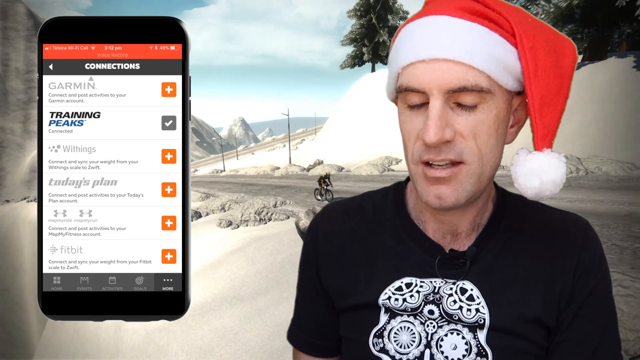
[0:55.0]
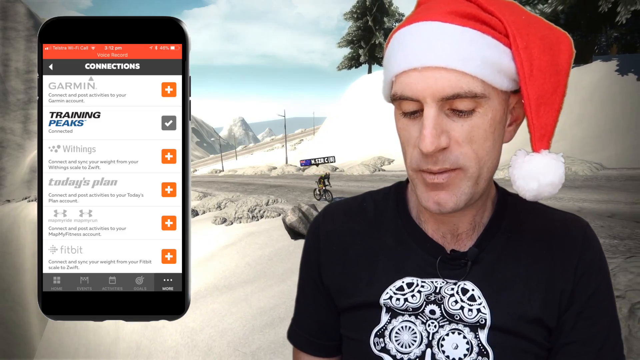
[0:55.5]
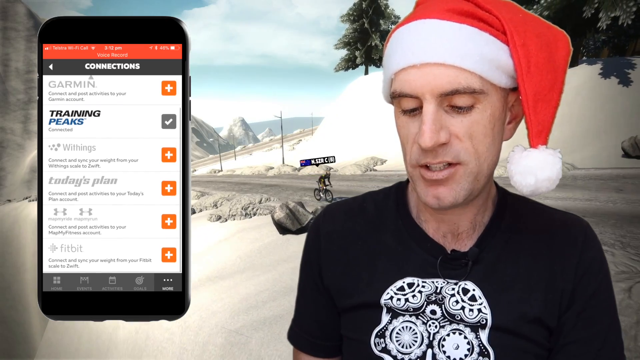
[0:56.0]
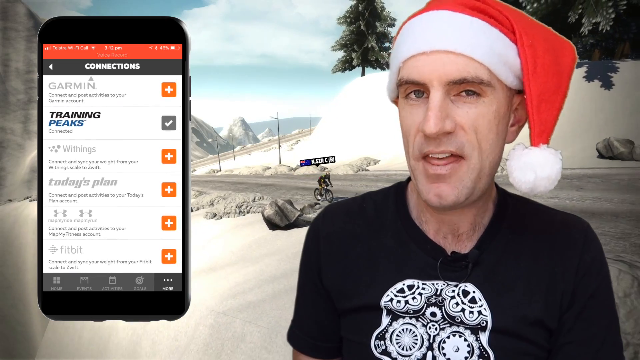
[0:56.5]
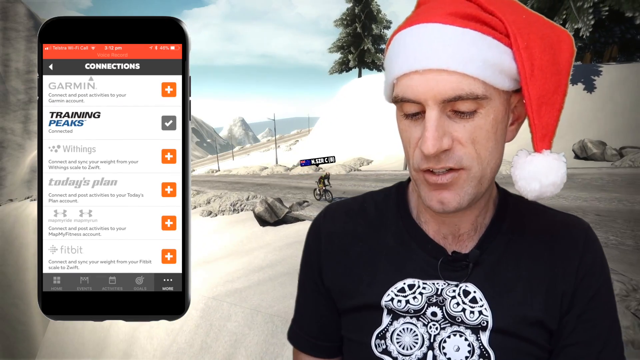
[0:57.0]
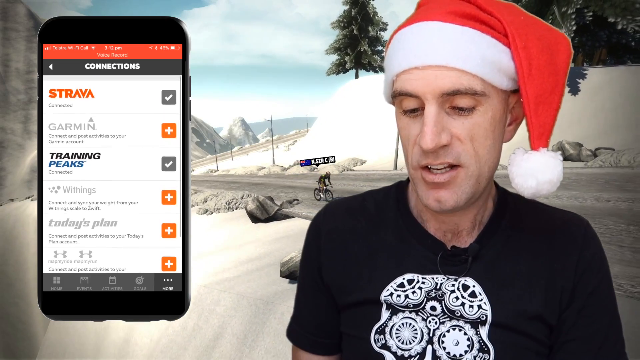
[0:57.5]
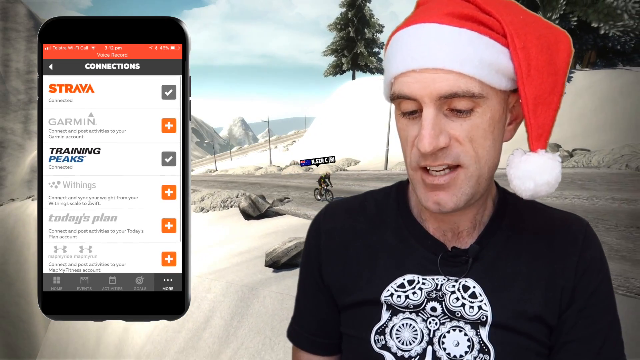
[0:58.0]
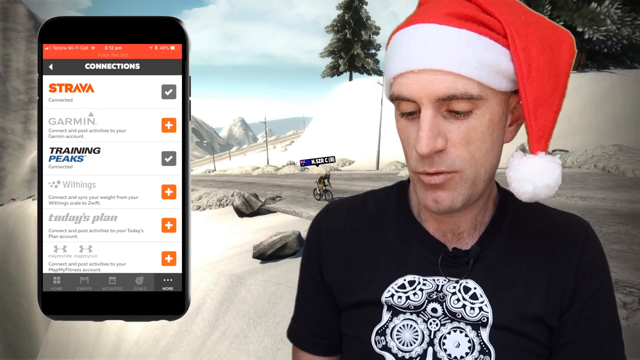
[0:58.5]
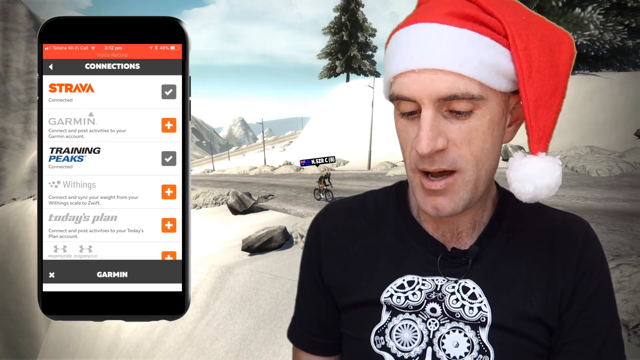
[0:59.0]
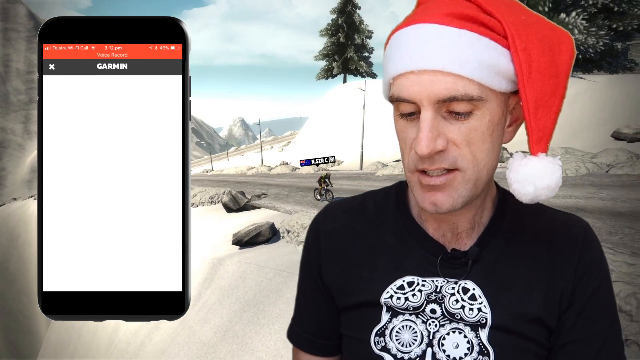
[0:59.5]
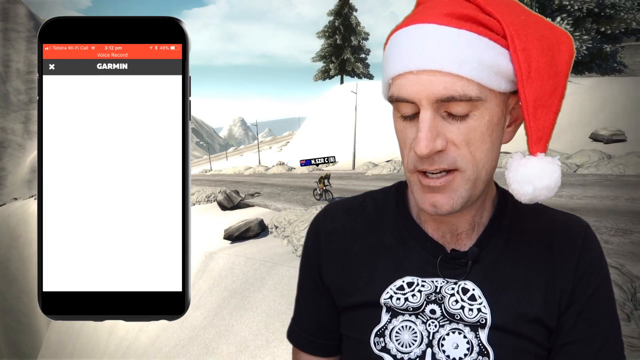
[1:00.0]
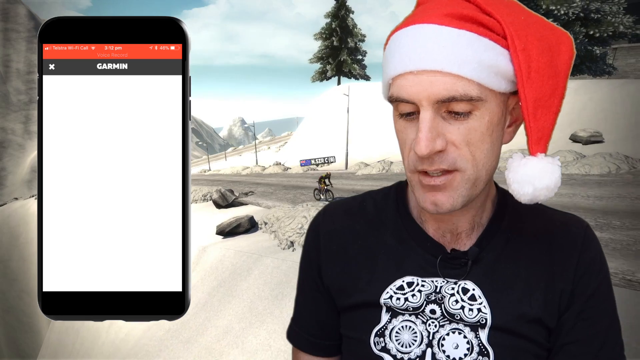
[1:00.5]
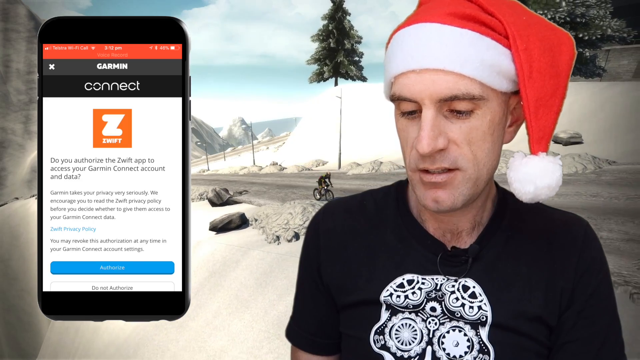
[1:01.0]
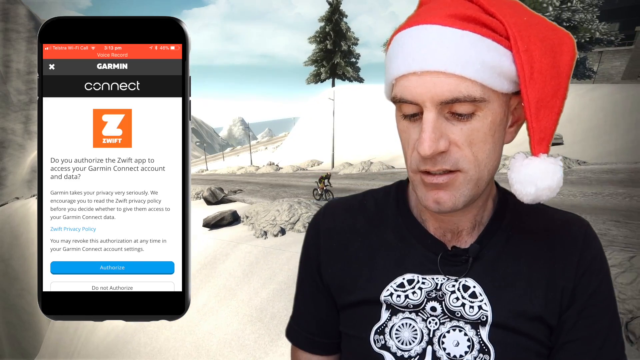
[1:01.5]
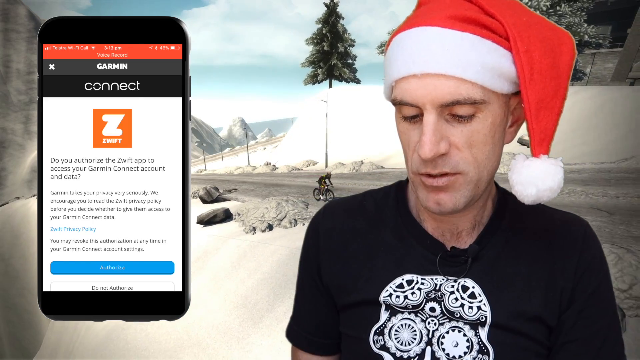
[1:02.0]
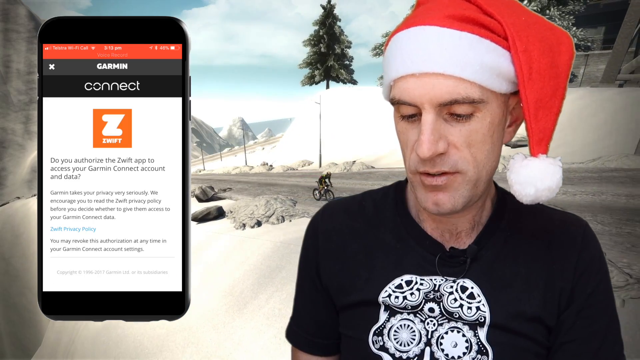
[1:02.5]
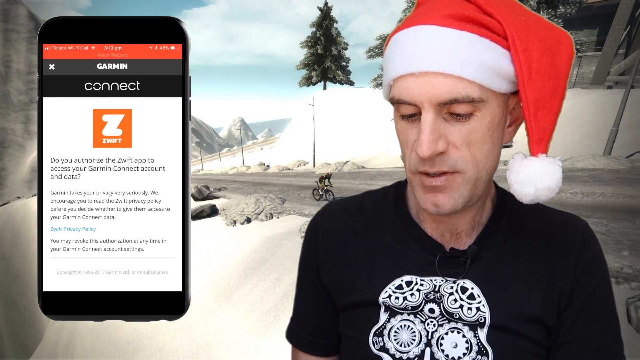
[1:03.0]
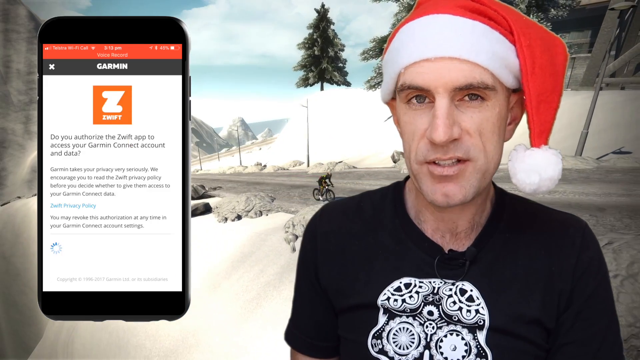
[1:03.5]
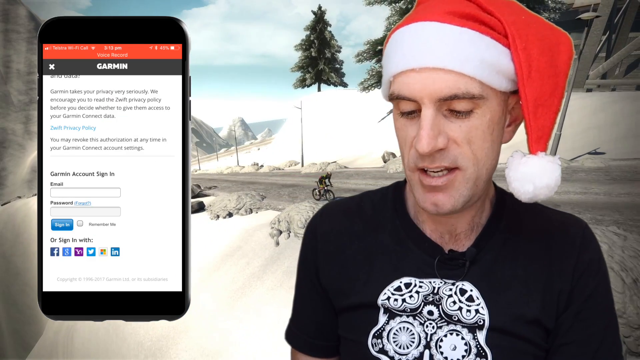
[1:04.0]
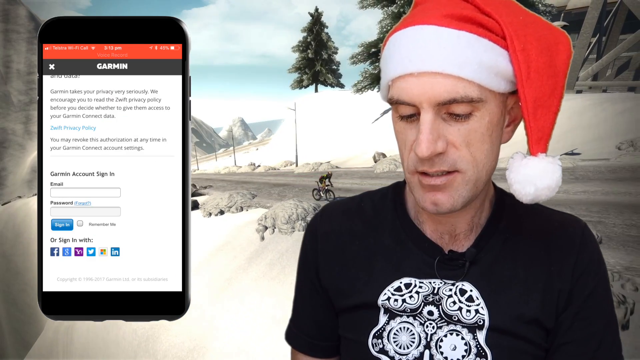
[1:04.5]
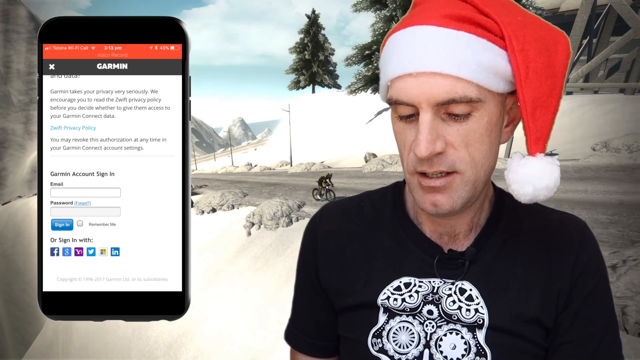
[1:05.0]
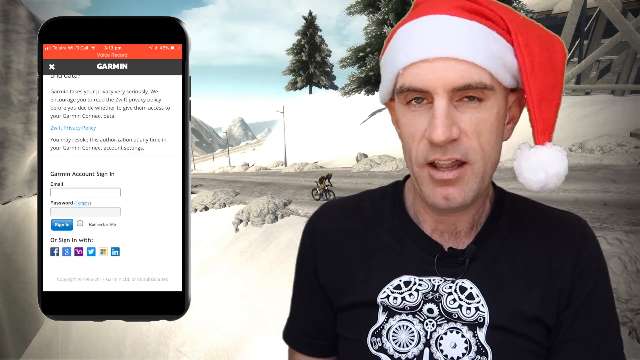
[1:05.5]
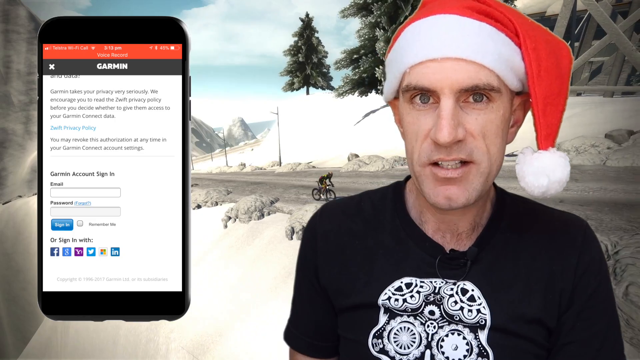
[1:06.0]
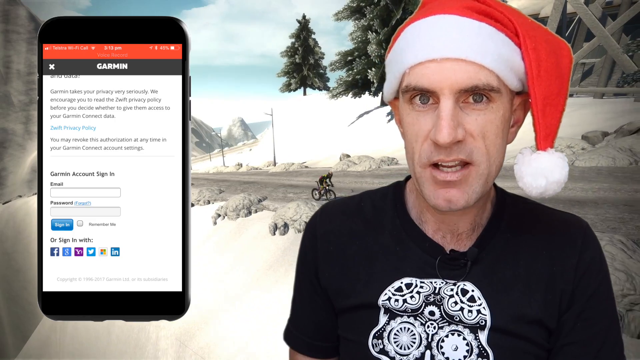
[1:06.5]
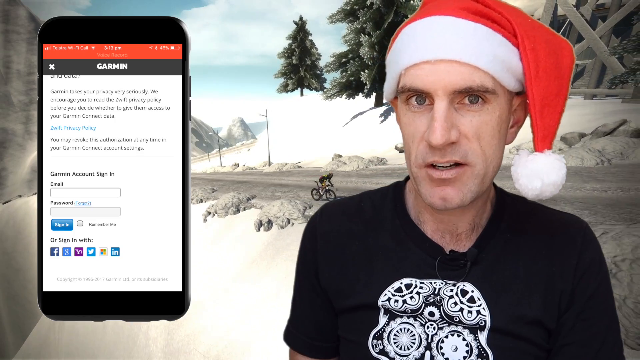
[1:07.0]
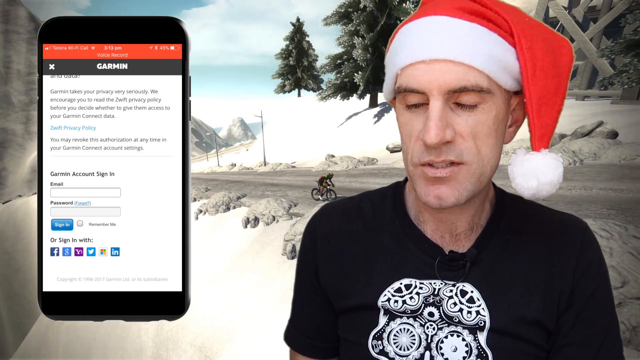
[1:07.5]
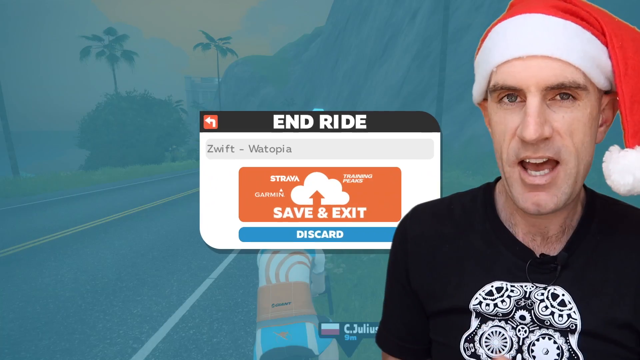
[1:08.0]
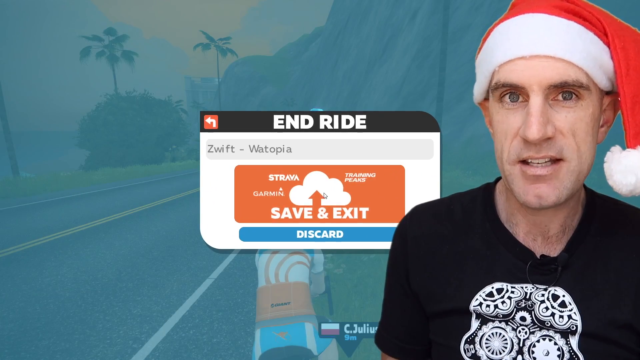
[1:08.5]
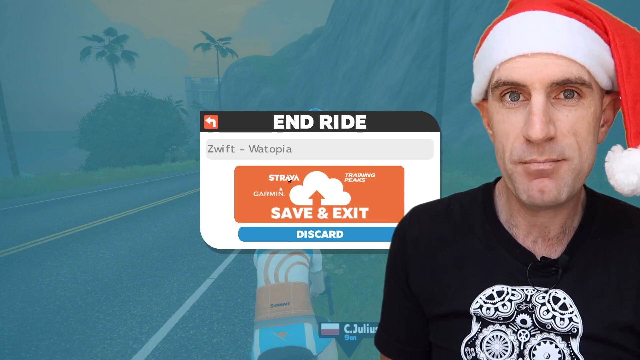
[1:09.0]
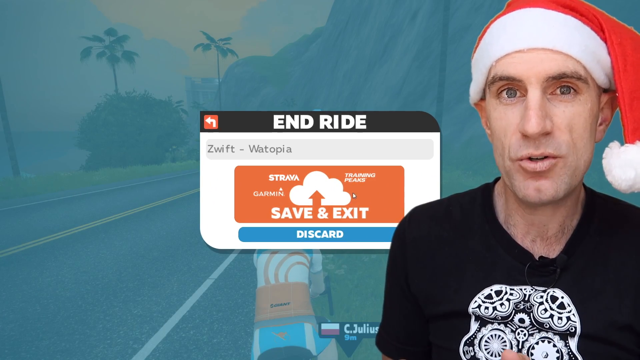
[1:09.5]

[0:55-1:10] The man, green-screened in the corner, continues to show his phone screen, with b-roll of a biker on a snowy road behind him and the image of his phone screen in the empty space. The phone still shows the connections page, where he apparently connects his fitness apps, including Strava and Garmin, in one spot. At the very end there is a hard cut: the same man in the Santa hat is still in the corner, but the background is back to the image of a tropical road. Very briefly, a screen appears that seems to say "end ride", with a button that says "save and exit".